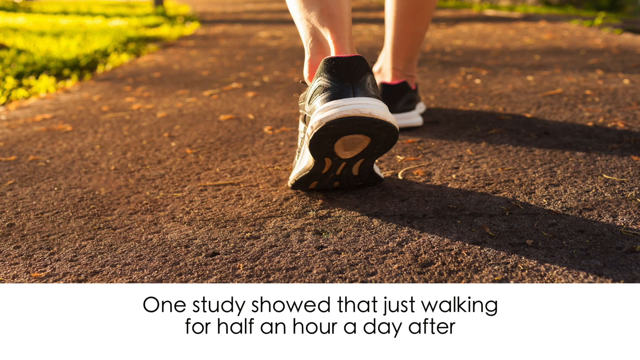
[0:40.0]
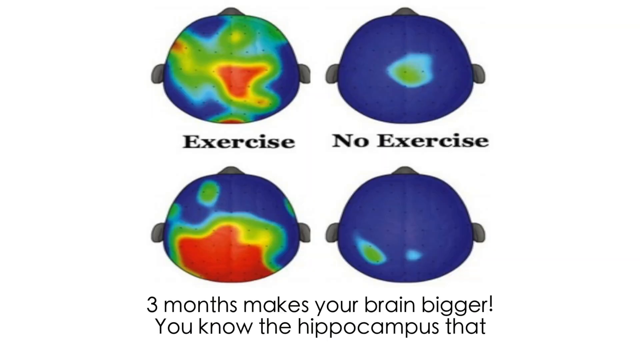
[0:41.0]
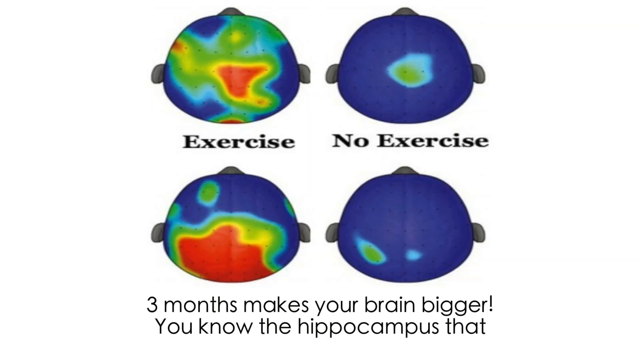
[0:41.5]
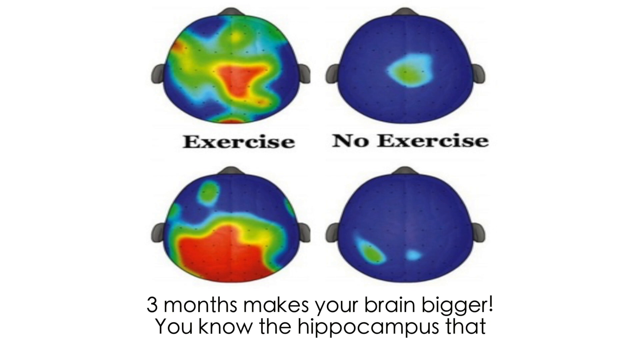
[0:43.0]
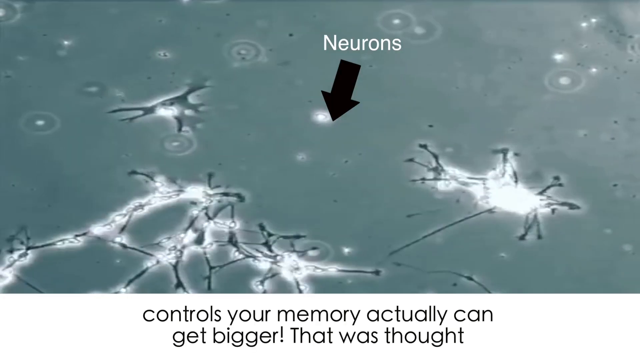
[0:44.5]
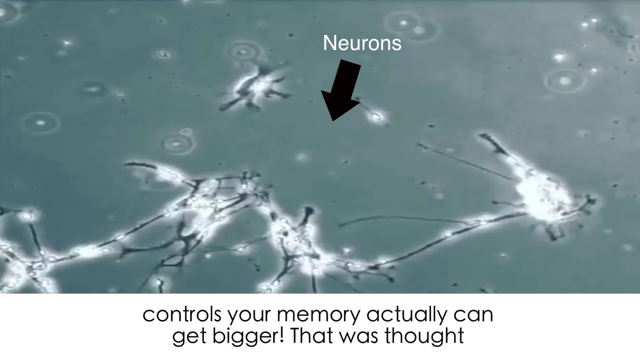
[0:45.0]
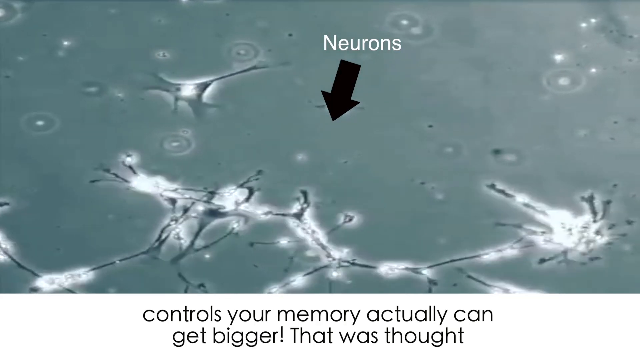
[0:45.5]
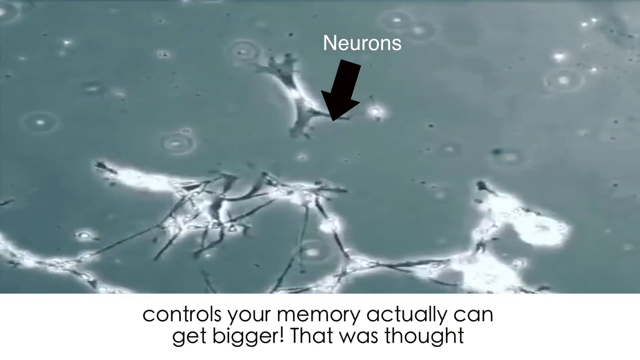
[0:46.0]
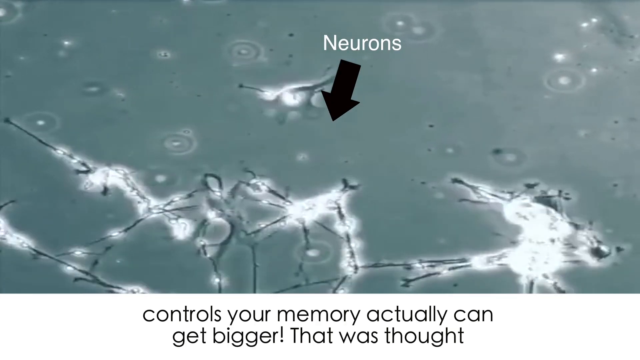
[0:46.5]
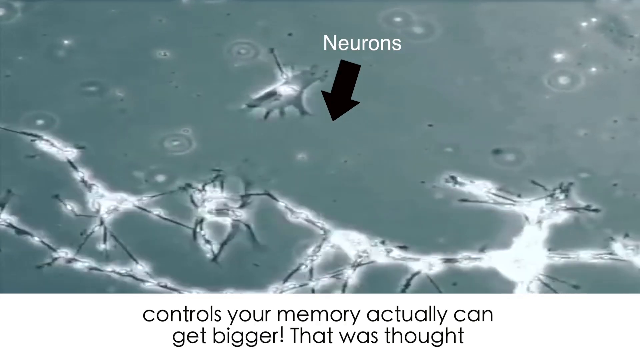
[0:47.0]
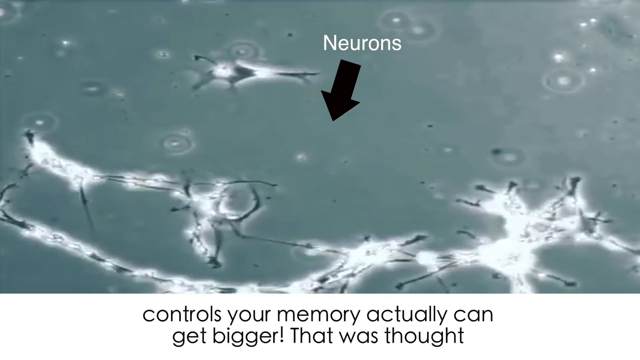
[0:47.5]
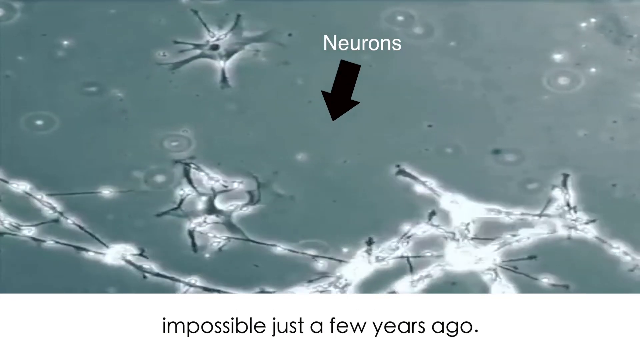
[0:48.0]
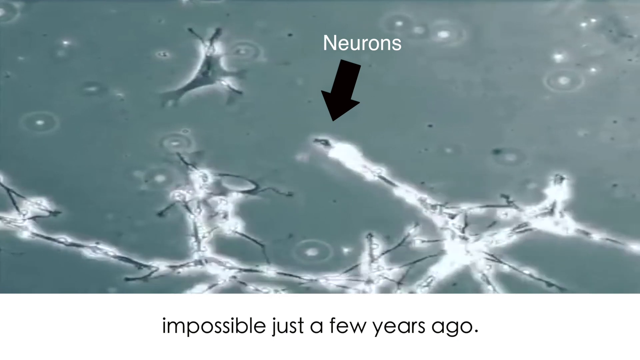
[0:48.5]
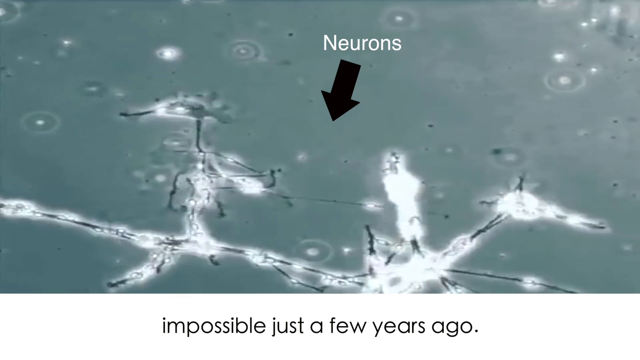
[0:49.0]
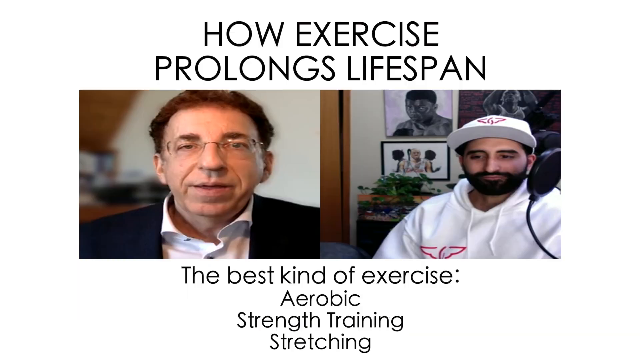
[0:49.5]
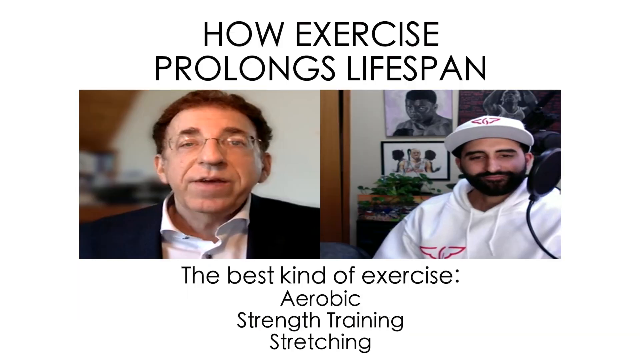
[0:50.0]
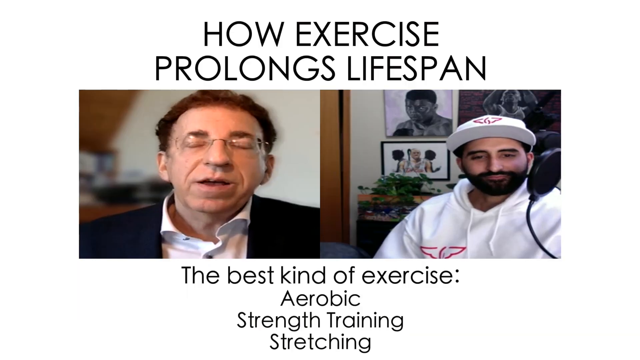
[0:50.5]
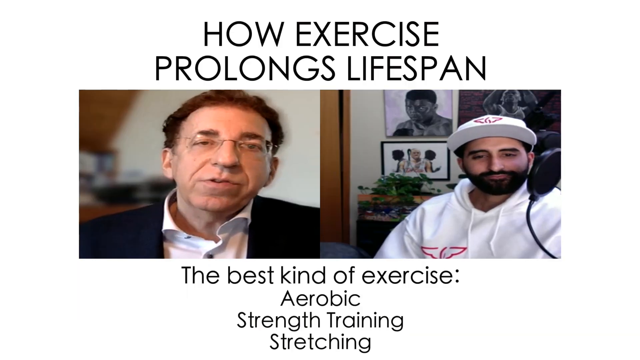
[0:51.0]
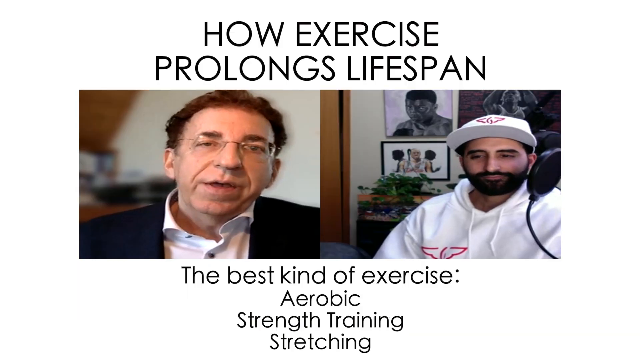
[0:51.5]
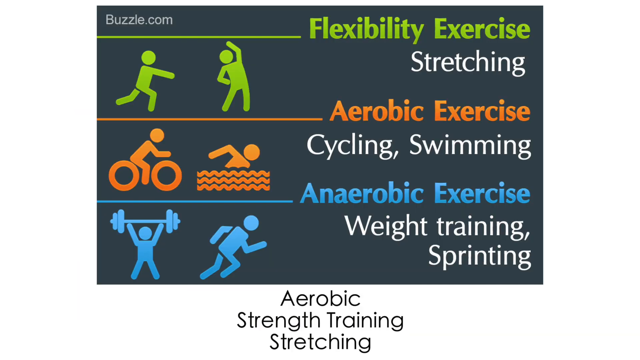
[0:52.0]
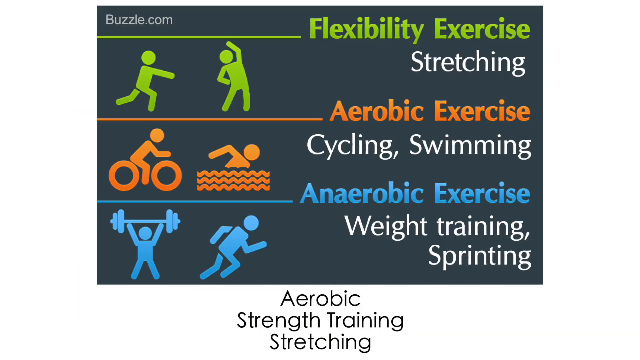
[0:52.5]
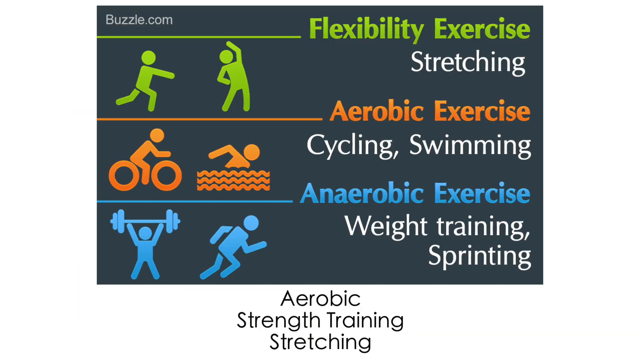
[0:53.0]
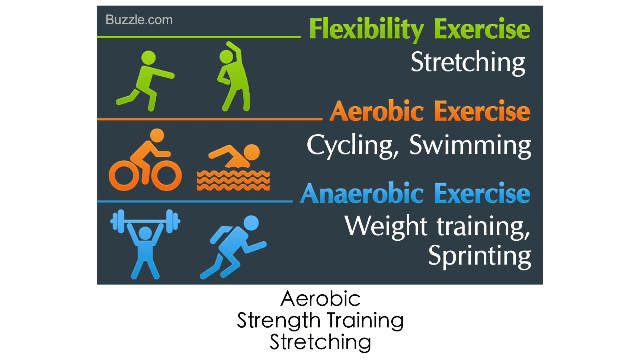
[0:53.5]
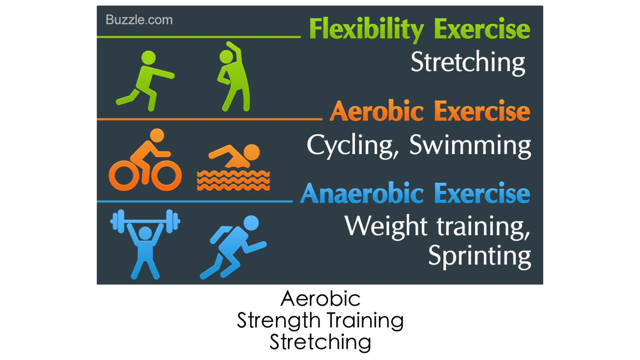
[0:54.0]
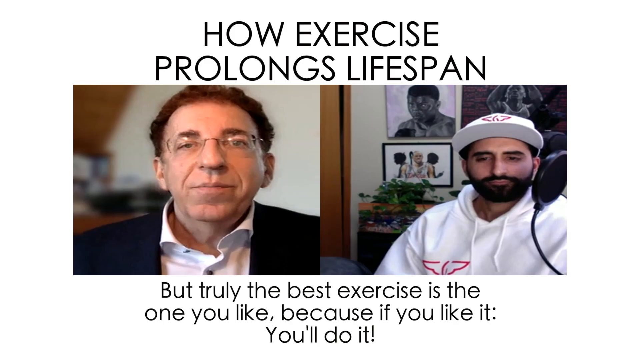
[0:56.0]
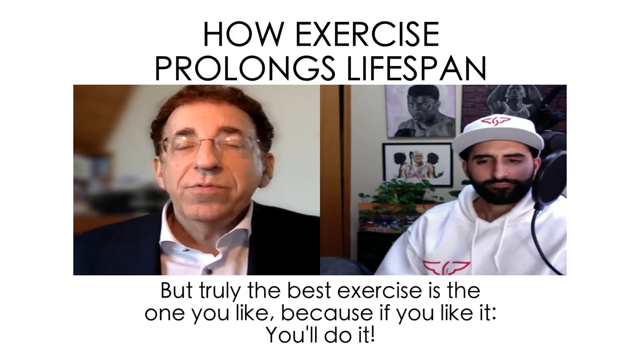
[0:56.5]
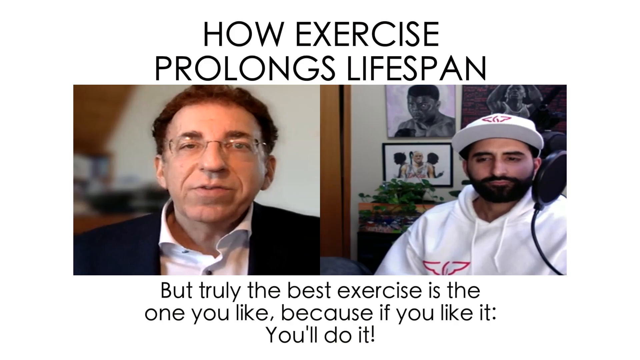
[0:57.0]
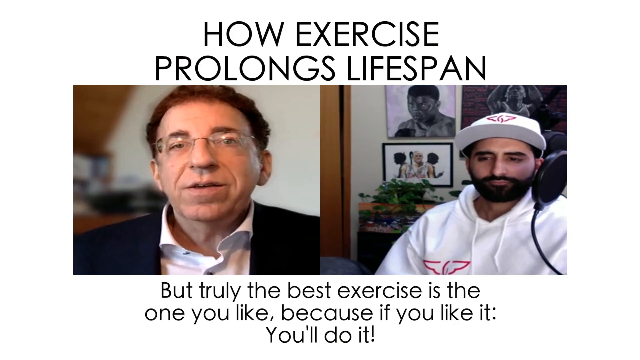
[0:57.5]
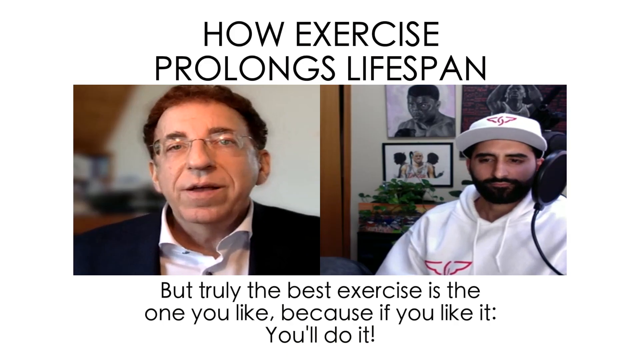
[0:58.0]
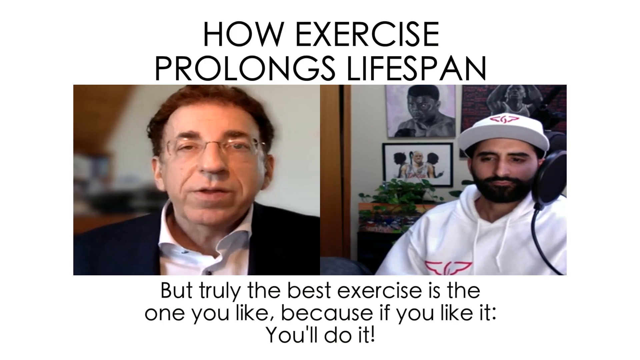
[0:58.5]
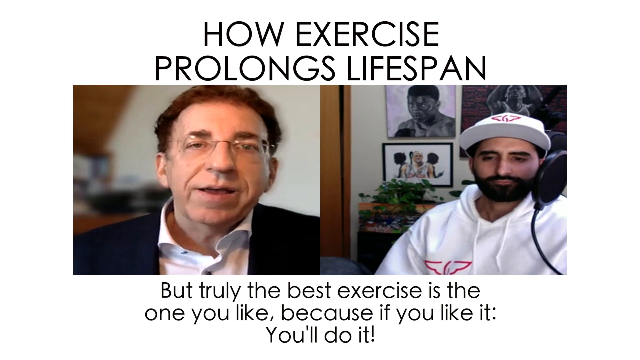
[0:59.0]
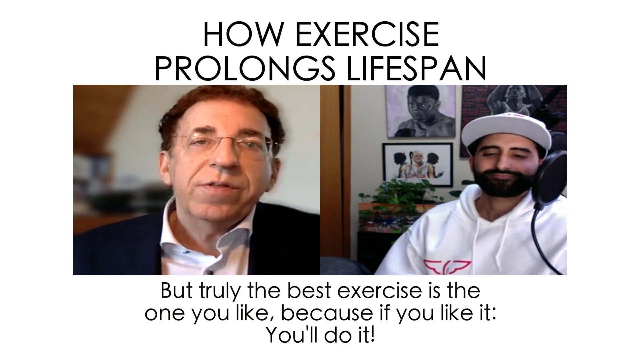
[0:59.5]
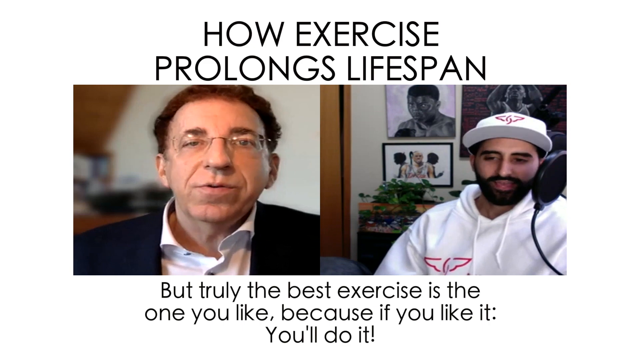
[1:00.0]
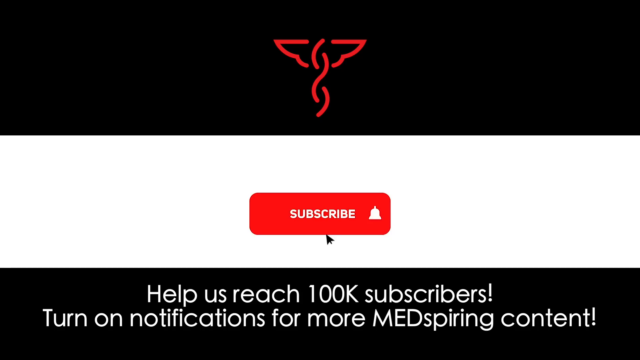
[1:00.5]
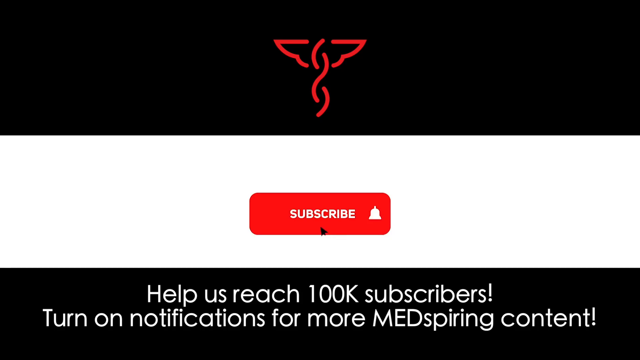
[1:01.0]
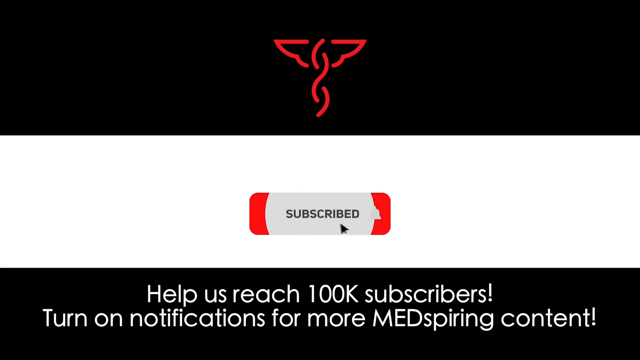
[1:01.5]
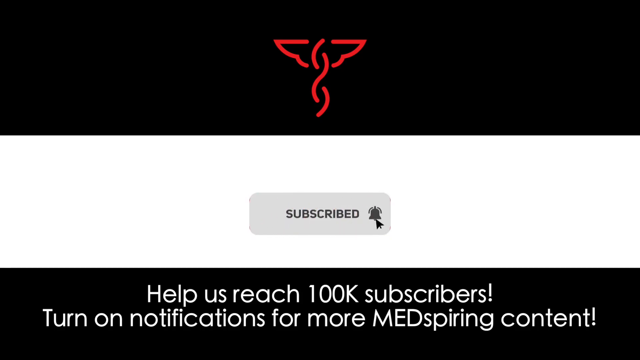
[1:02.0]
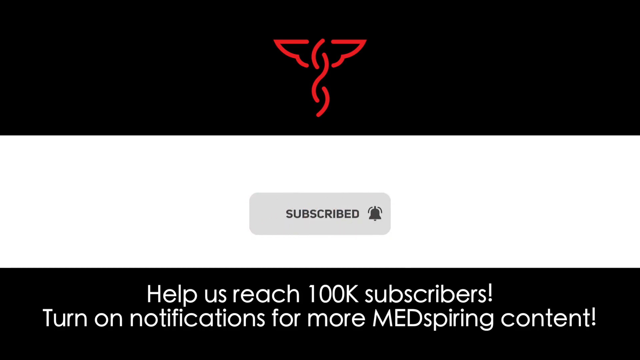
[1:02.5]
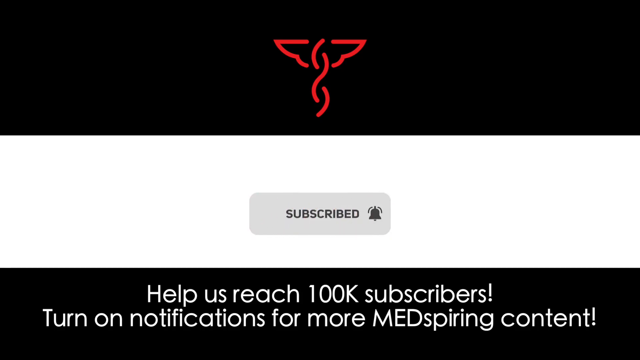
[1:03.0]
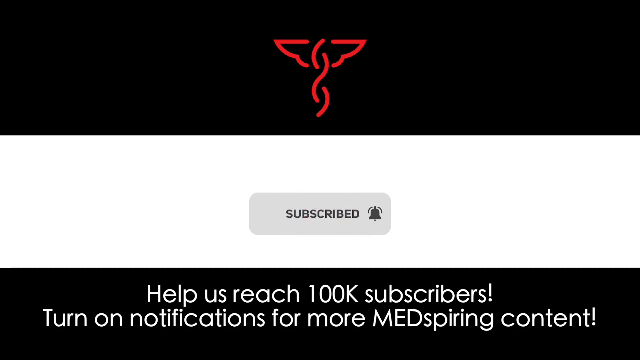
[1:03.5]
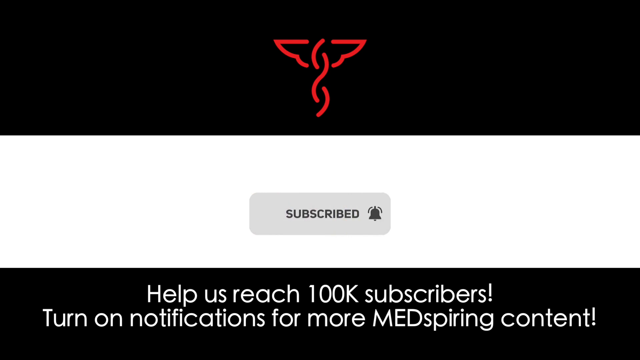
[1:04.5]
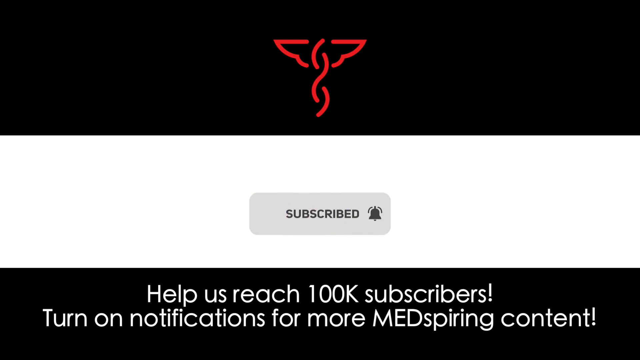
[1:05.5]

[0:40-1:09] He mentions that walking for half an hour a day for three months makes the brain bigger, and that the hippocampus, which controls memory, can get bigger. Meanwhile the graphics show walking and a comparison of brain activity when exercising versus not exercising, along with neurons visualized in the dark in a graphic. The two are then shown talking, followed by a demonstration of which types of exercise are good: flexibility, anaerobic and aerobic. It concludes with them speaking together, and at the end of the video a subscribe button appears with text reading "help us reach 100k subscribers turn on notifications for more medspiring content".